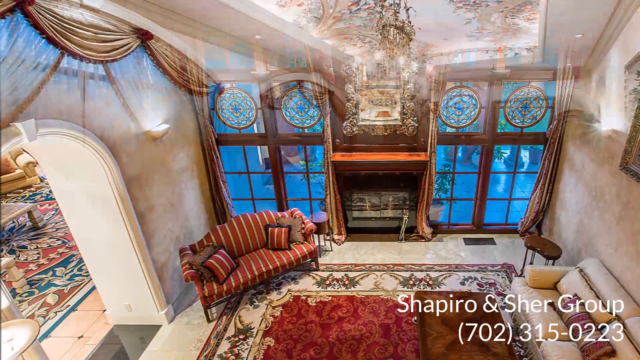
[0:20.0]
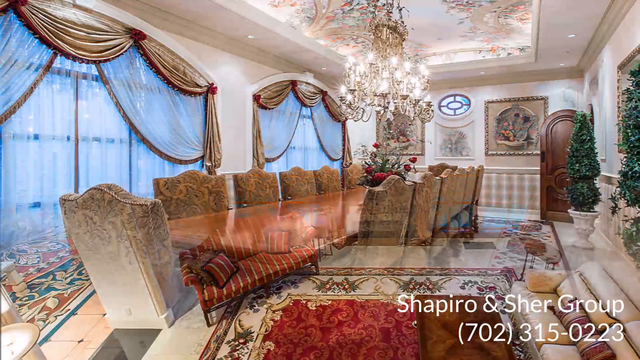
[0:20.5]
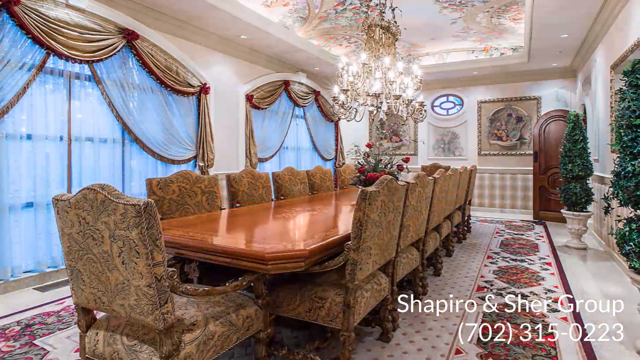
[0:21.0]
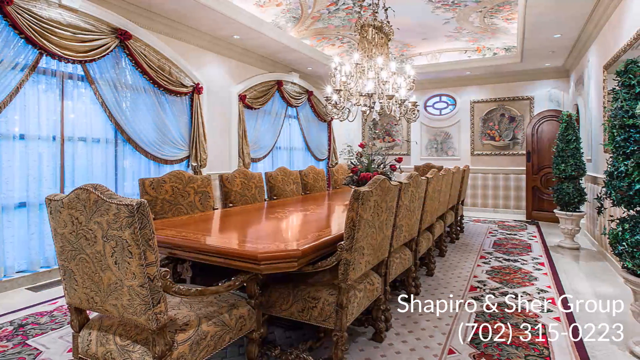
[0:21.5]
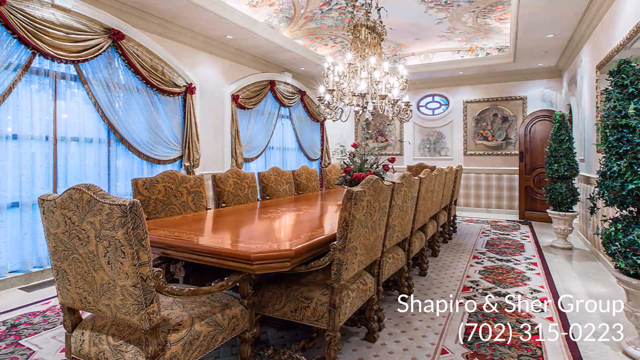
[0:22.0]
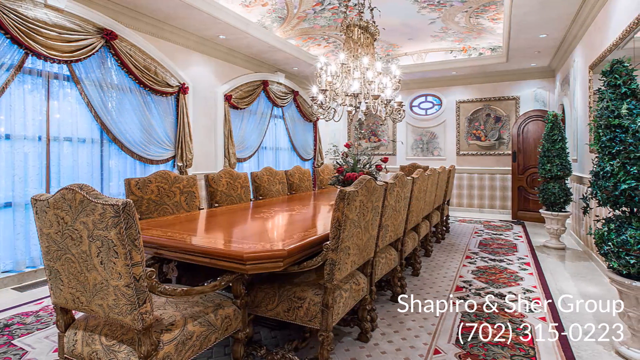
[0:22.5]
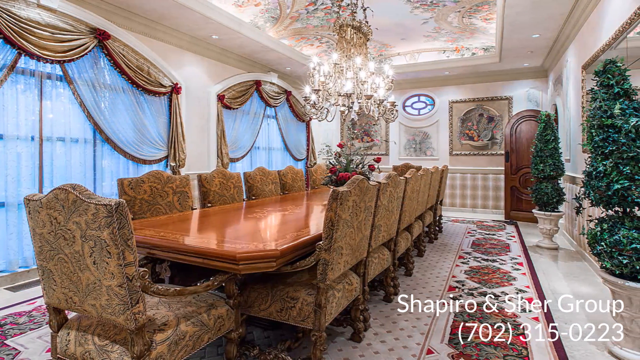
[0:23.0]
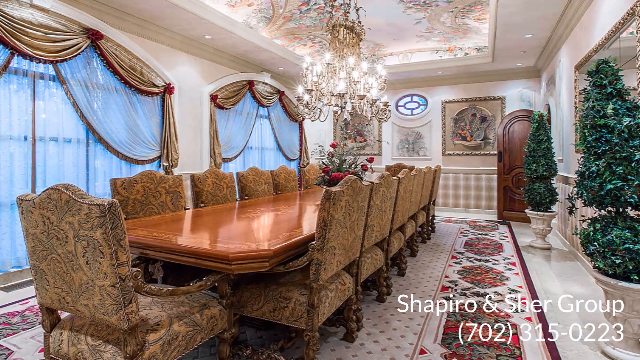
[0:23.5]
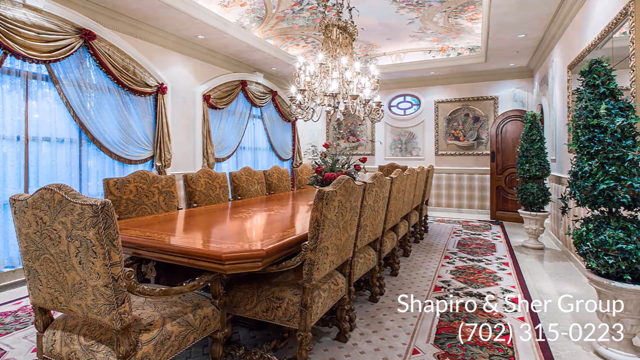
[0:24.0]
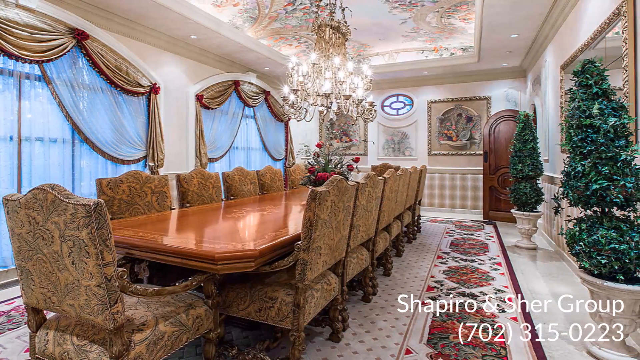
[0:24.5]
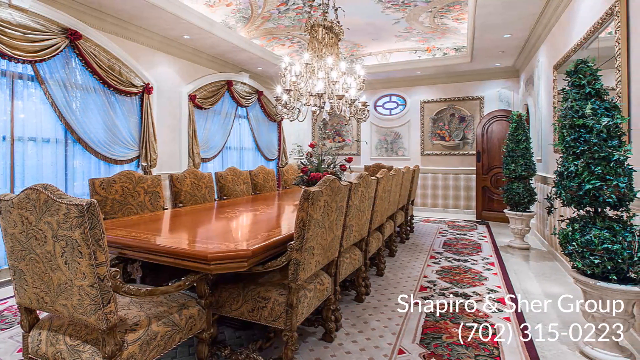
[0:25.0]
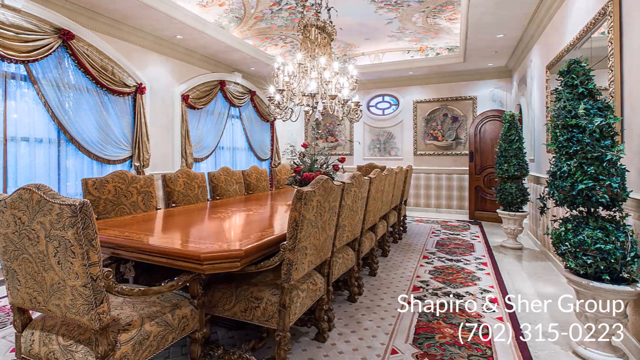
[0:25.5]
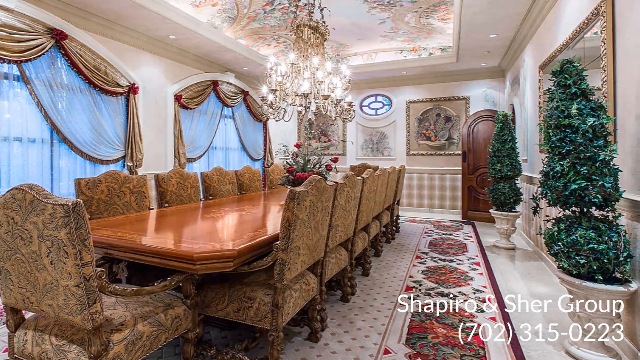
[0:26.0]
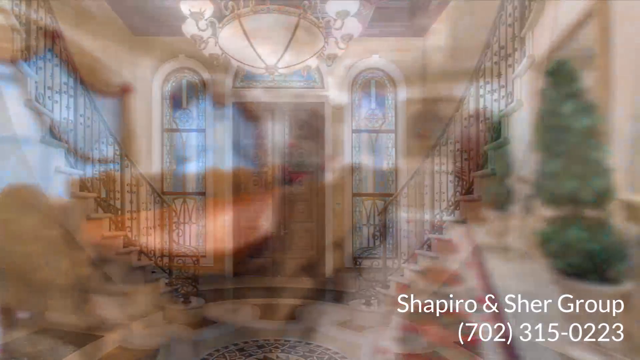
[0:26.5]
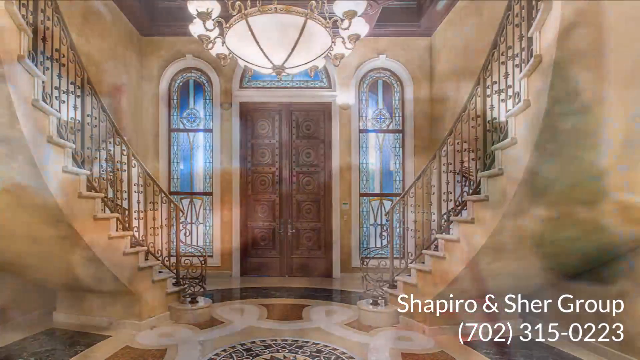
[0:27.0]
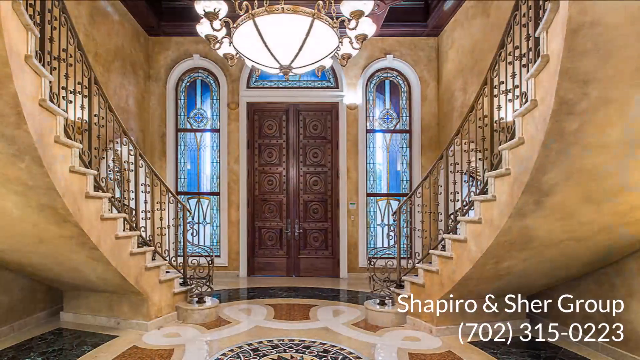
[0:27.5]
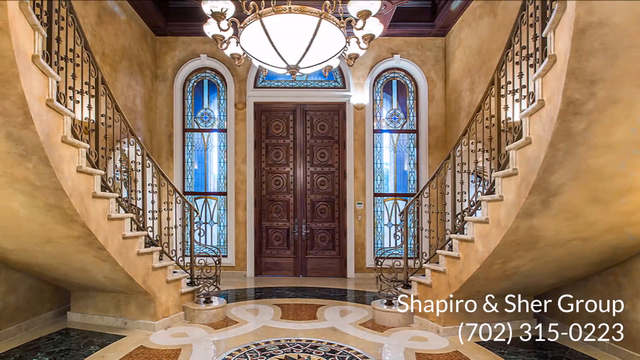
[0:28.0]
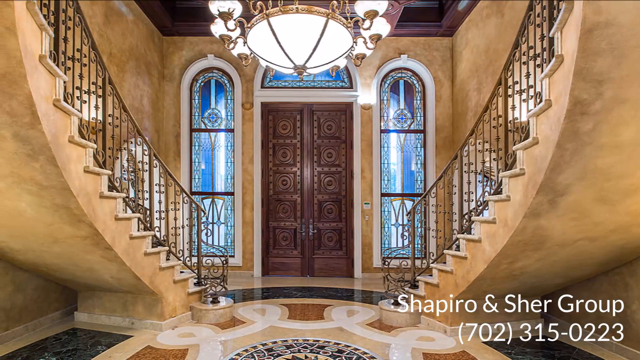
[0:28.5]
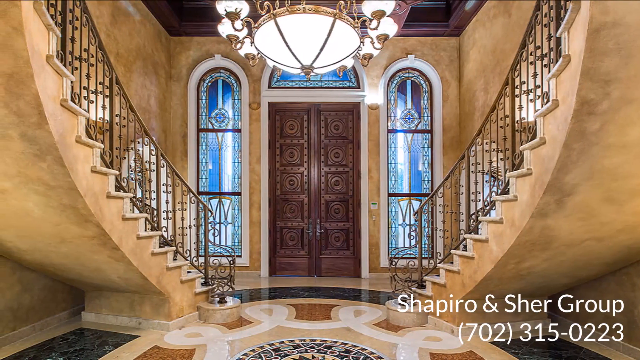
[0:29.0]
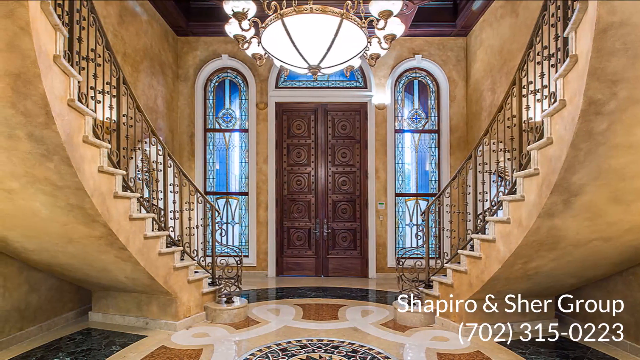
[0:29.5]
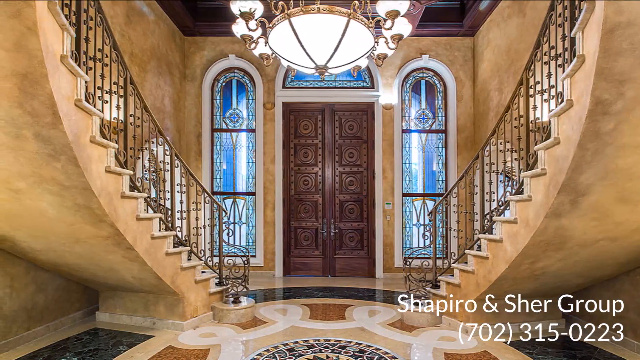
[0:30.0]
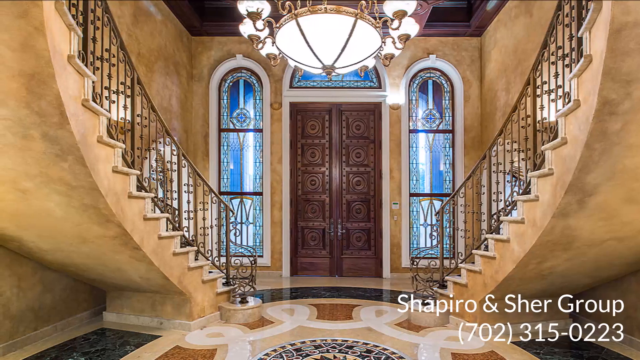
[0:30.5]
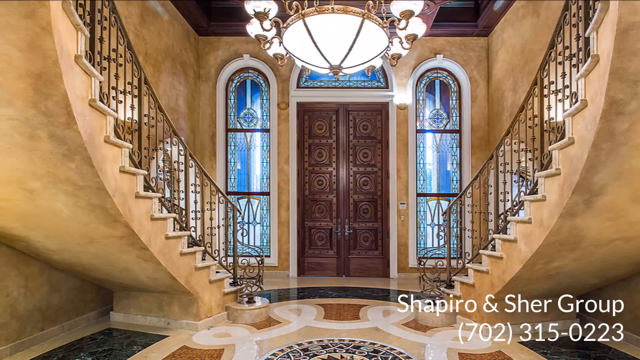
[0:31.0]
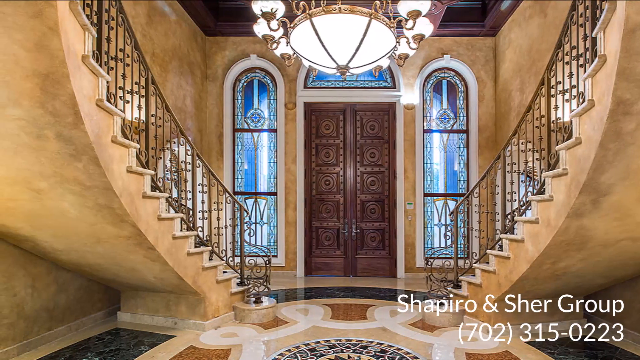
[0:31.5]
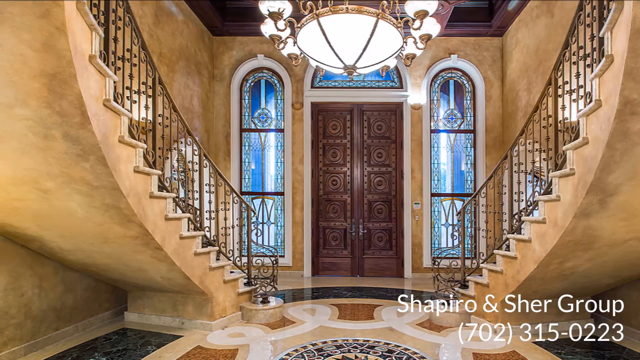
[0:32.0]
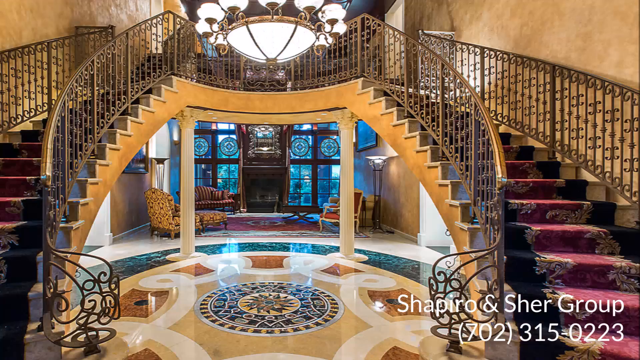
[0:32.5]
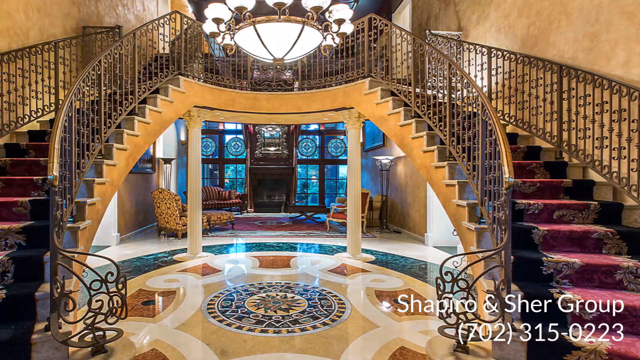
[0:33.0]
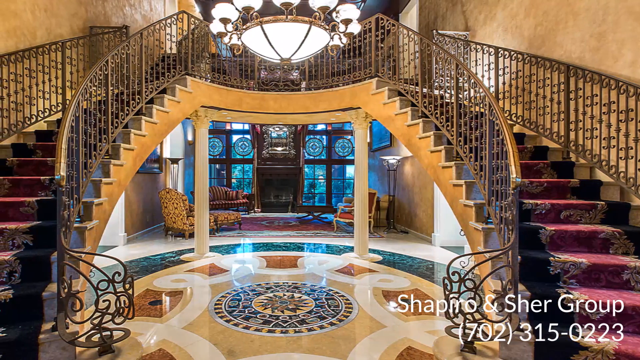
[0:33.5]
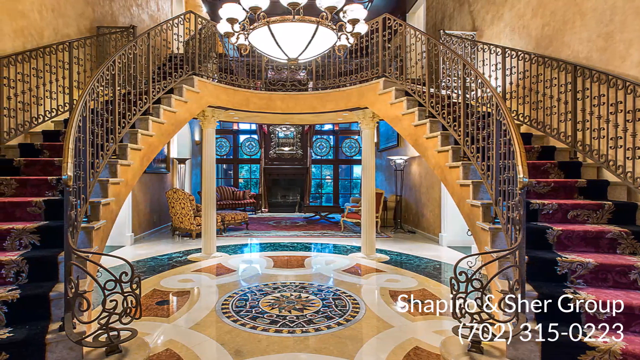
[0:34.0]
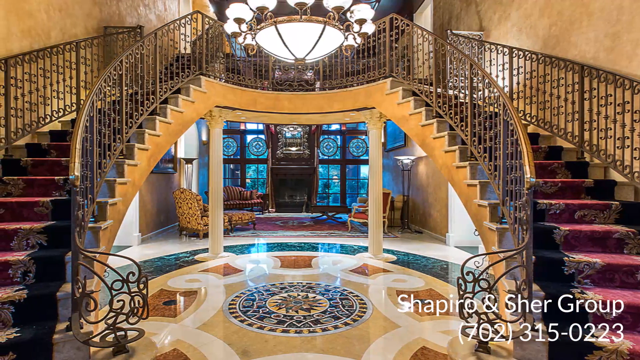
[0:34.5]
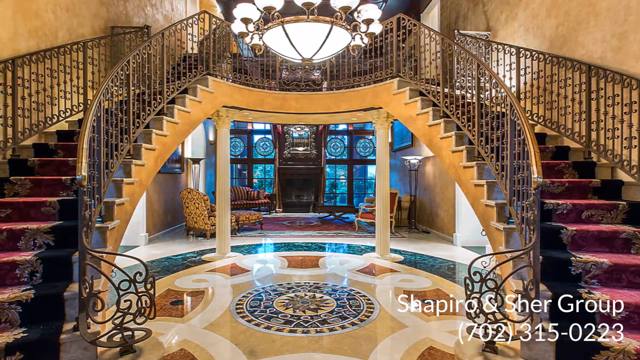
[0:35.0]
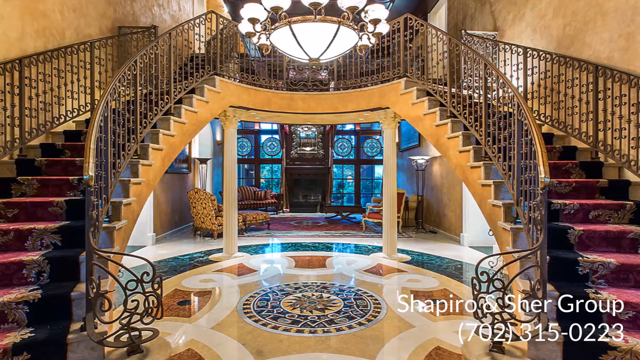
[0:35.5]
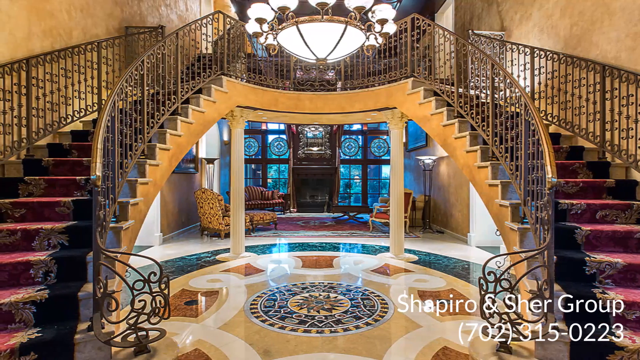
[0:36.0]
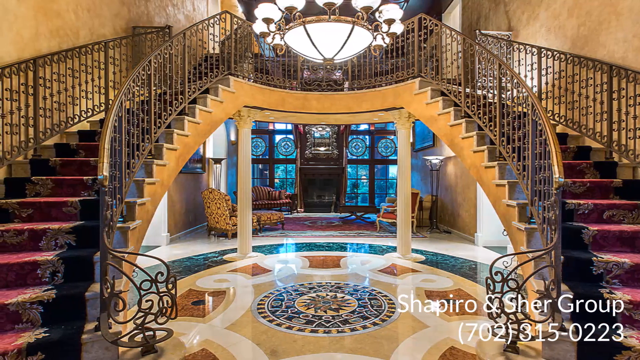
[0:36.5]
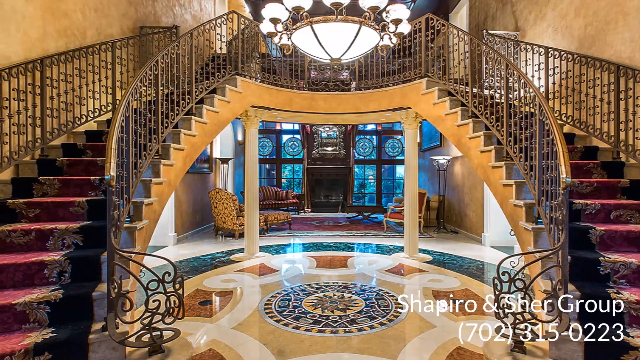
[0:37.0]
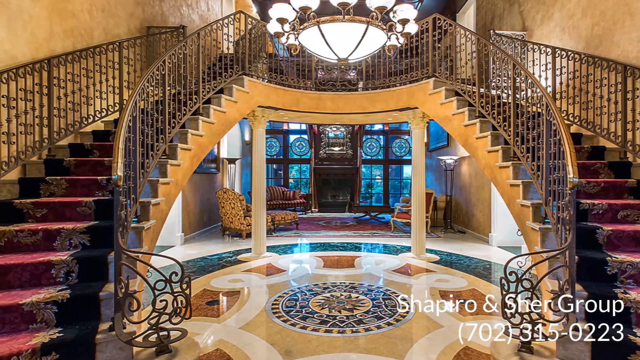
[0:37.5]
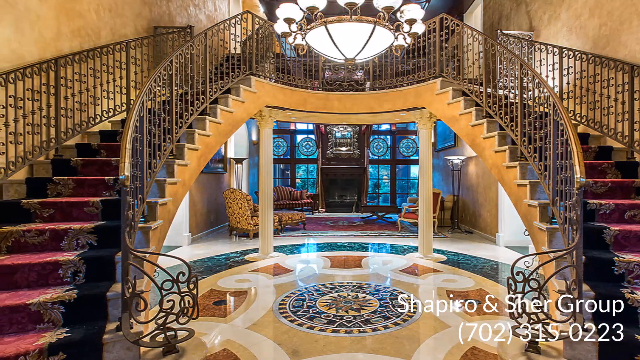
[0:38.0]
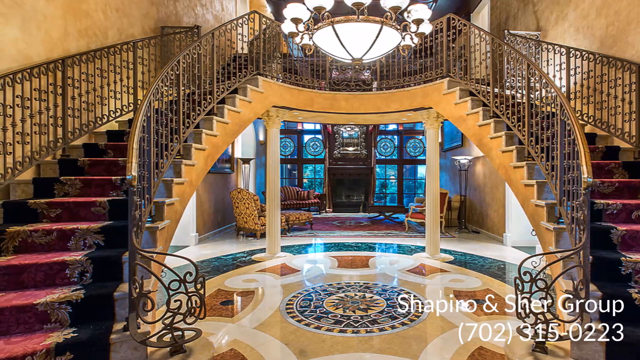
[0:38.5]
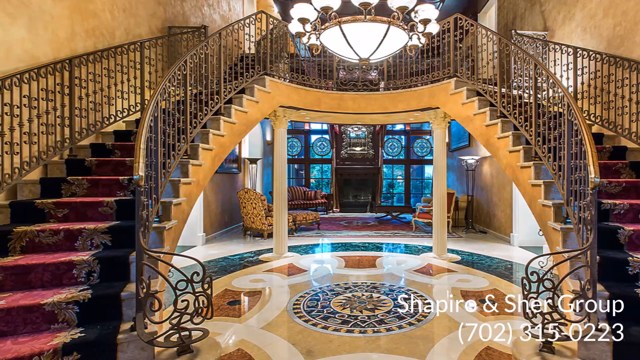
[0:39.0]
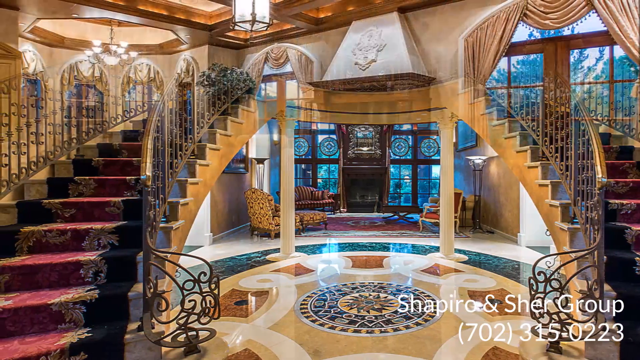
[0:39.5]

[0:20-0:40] Another very large room looks like a boardroom. A very long brown wooden table has a total of 14 chairs around it: six on each long side and a single chair at each end. The chairs are light brown with some black design patterns on them. To the left are two large windows. A silver chandelier with its lights turned on hangs from the ceiling. A very nice-looking rug is underneath the table and chairs. Up above, the ceiling is white with some sort of painted design where the chandelier hangs down.